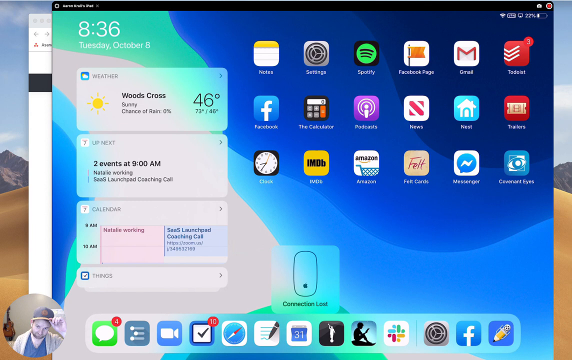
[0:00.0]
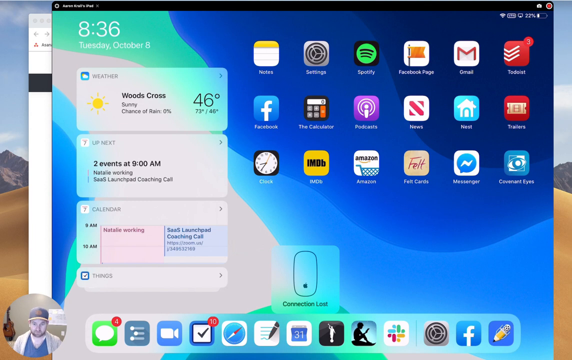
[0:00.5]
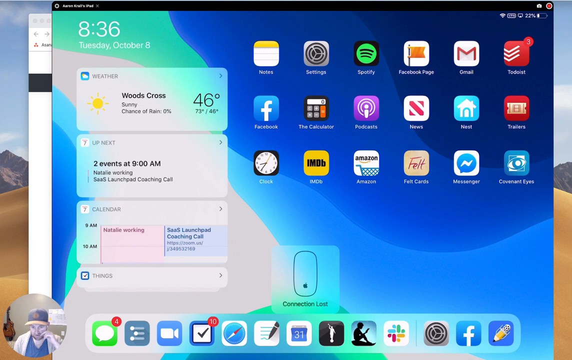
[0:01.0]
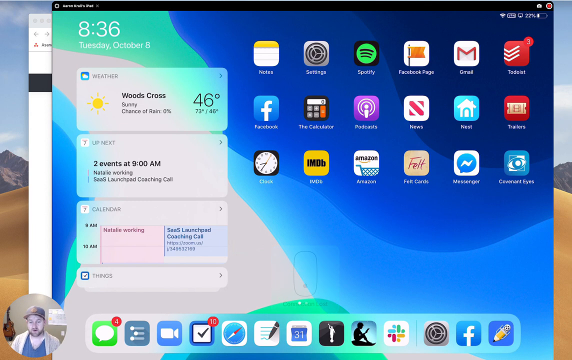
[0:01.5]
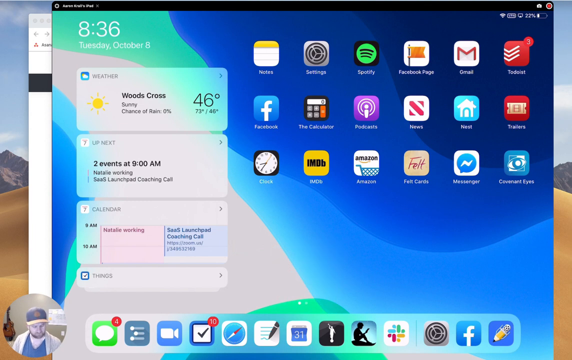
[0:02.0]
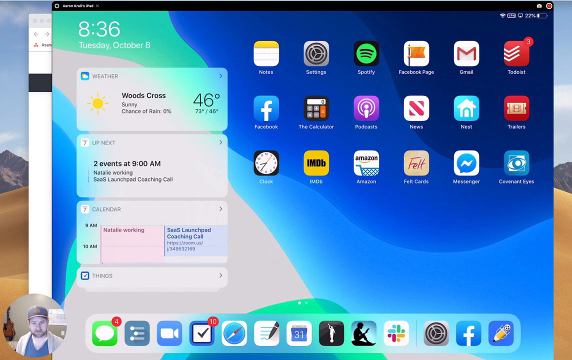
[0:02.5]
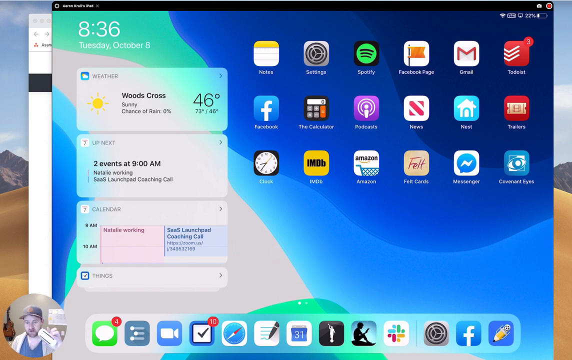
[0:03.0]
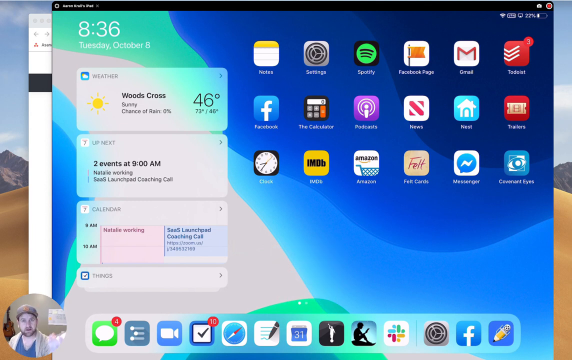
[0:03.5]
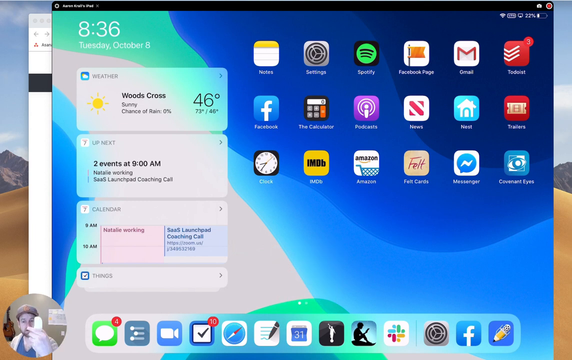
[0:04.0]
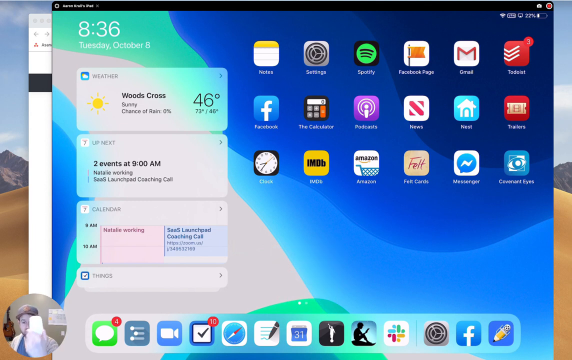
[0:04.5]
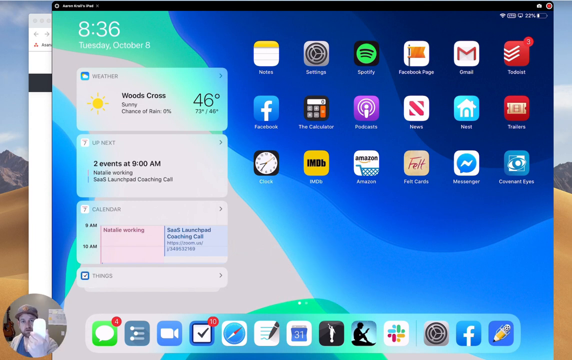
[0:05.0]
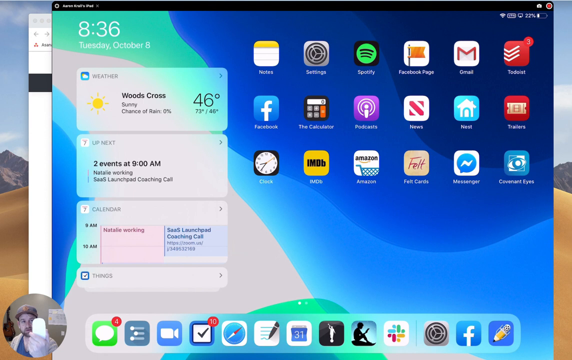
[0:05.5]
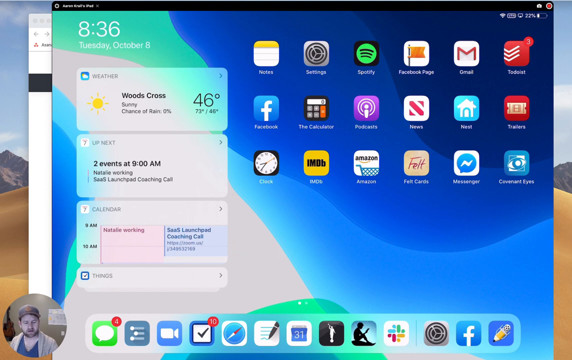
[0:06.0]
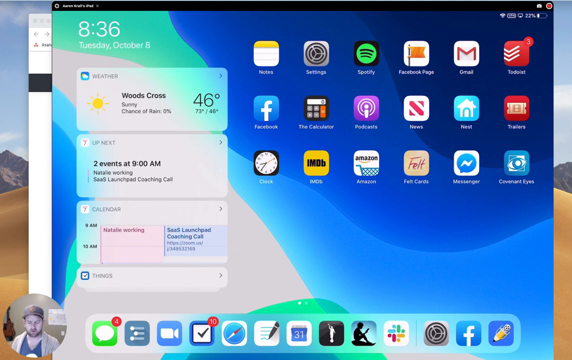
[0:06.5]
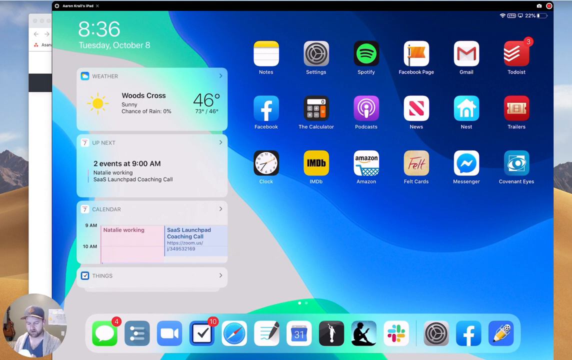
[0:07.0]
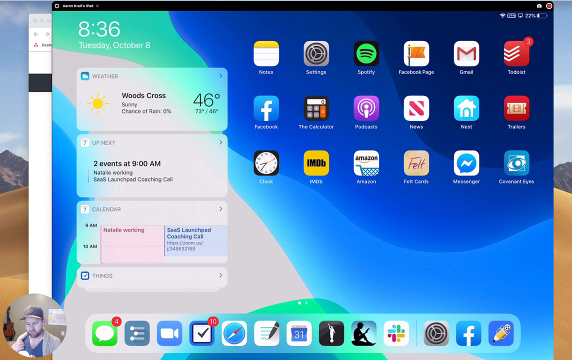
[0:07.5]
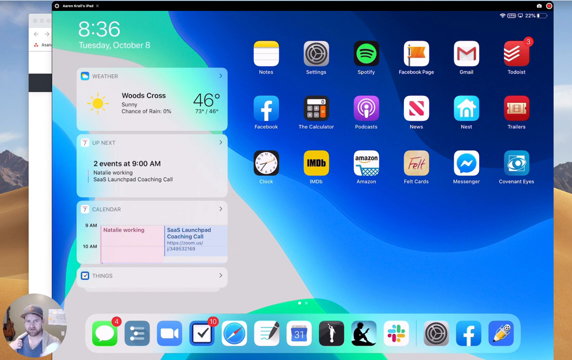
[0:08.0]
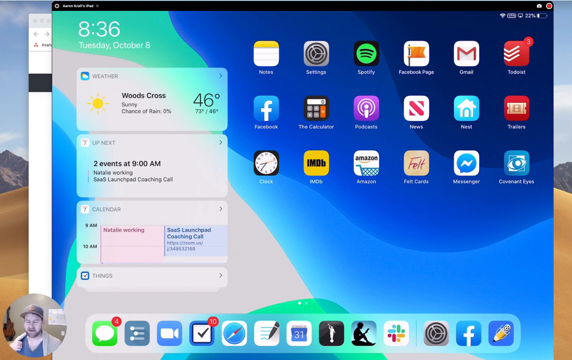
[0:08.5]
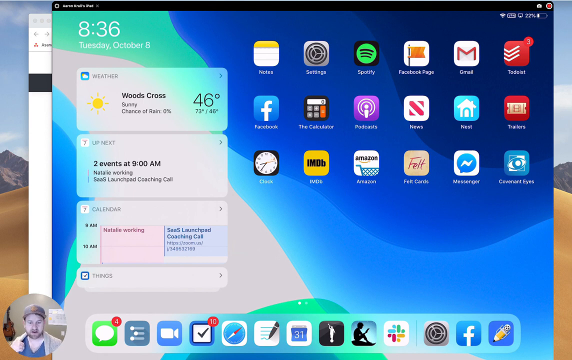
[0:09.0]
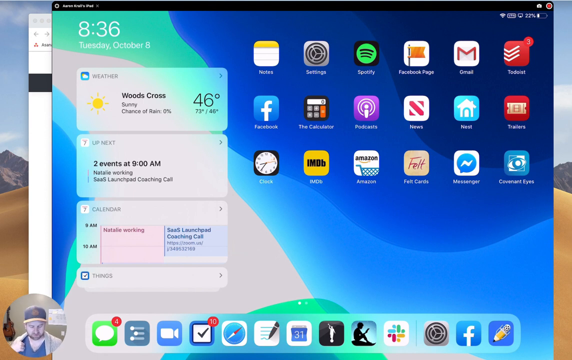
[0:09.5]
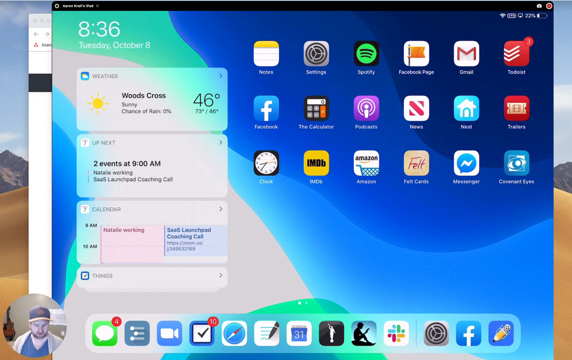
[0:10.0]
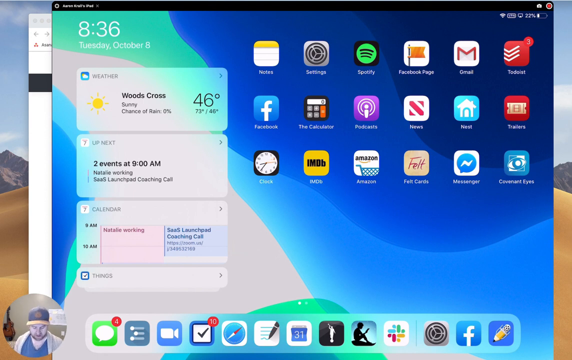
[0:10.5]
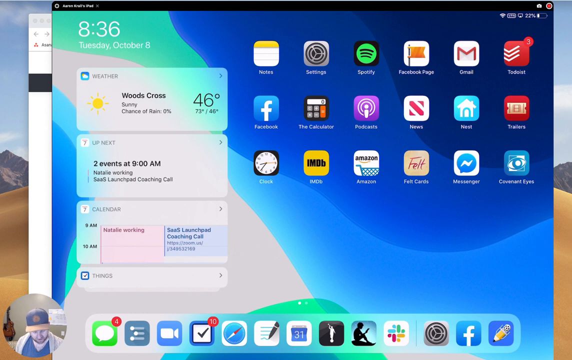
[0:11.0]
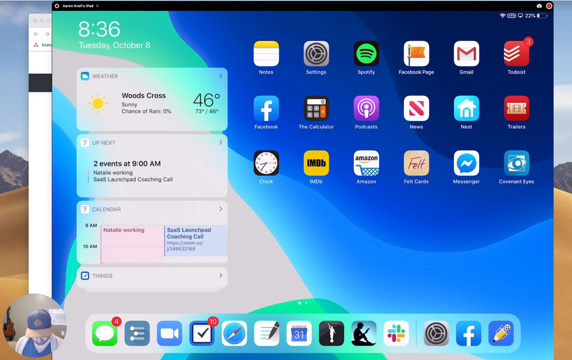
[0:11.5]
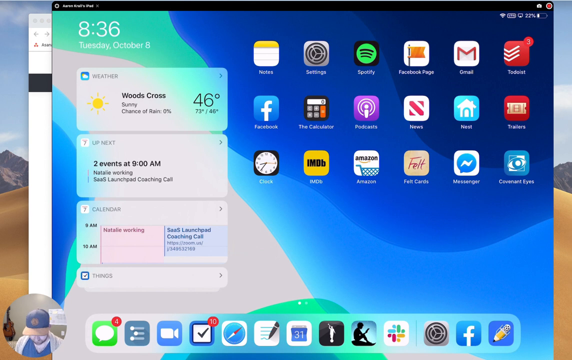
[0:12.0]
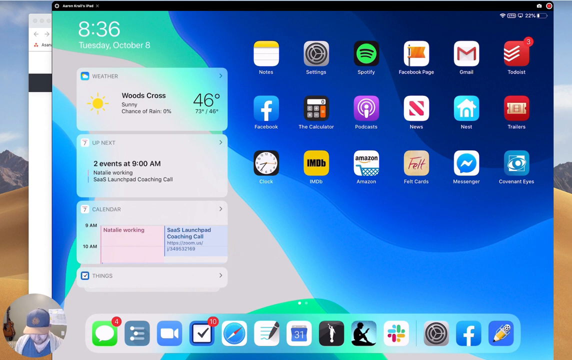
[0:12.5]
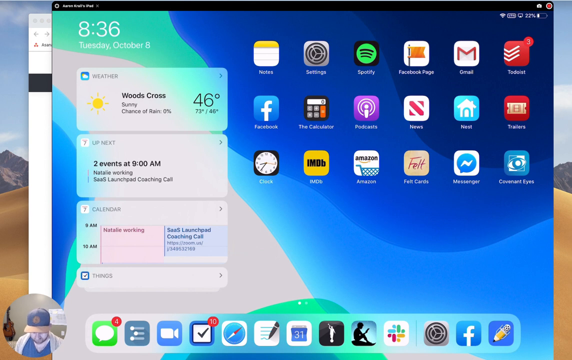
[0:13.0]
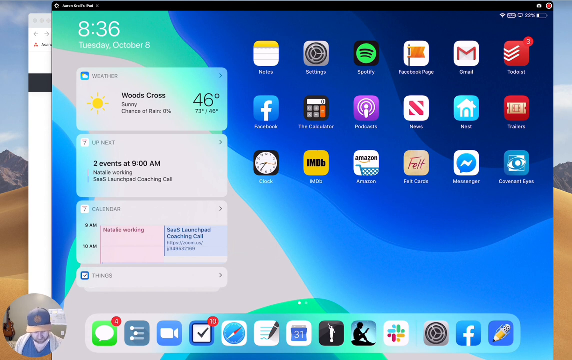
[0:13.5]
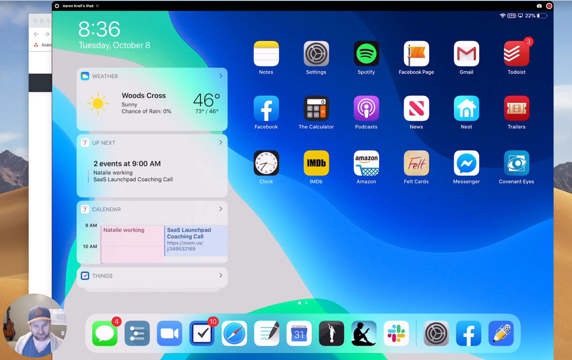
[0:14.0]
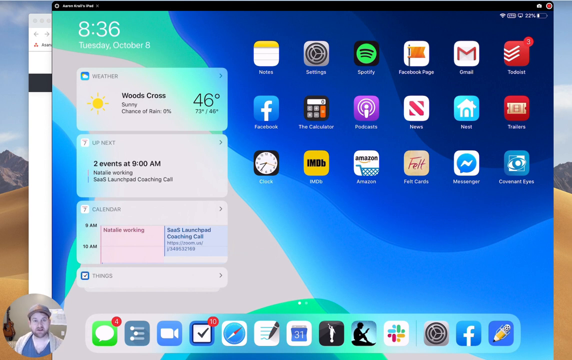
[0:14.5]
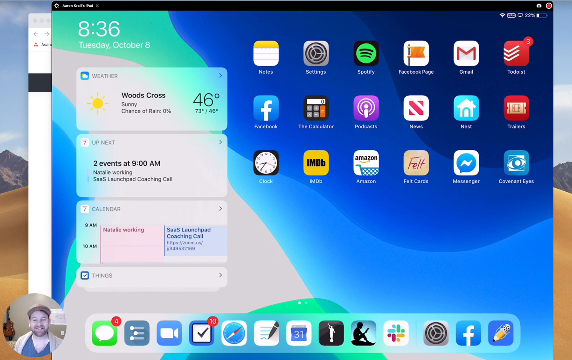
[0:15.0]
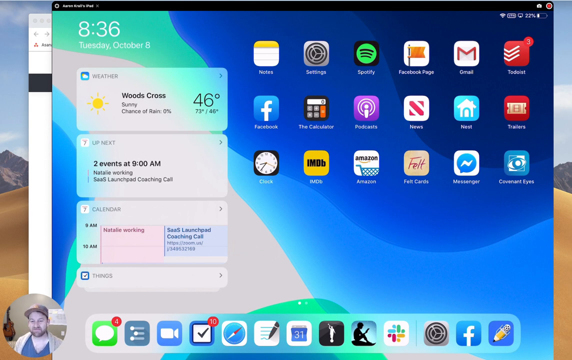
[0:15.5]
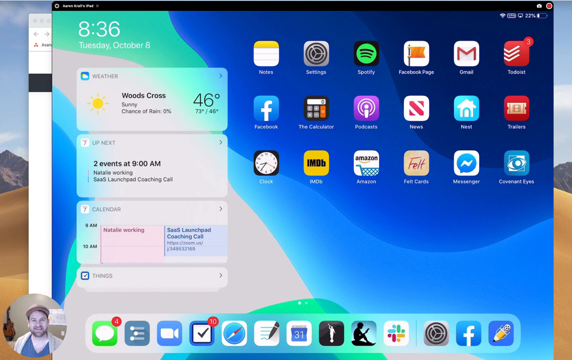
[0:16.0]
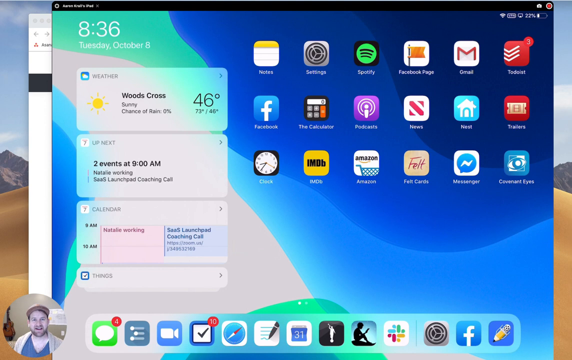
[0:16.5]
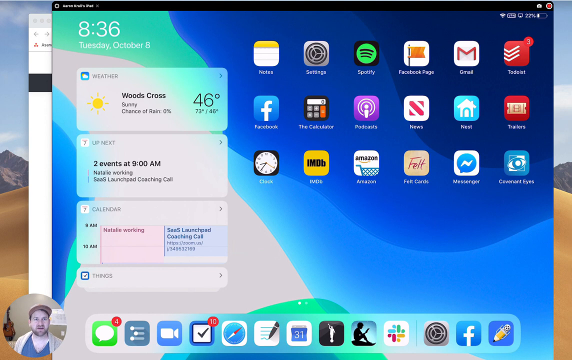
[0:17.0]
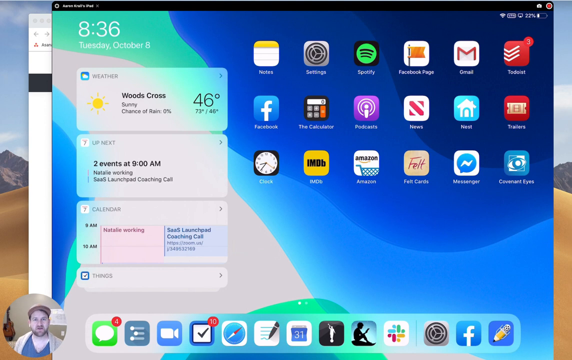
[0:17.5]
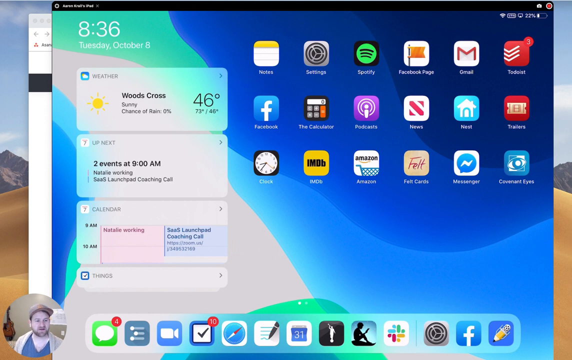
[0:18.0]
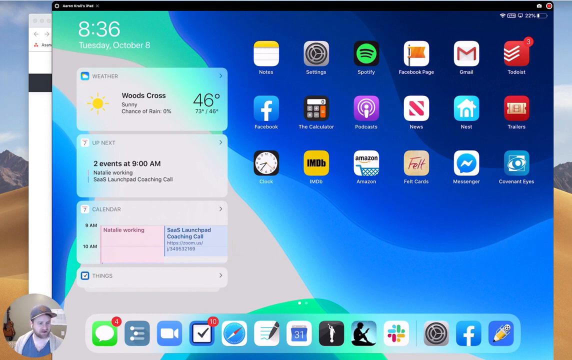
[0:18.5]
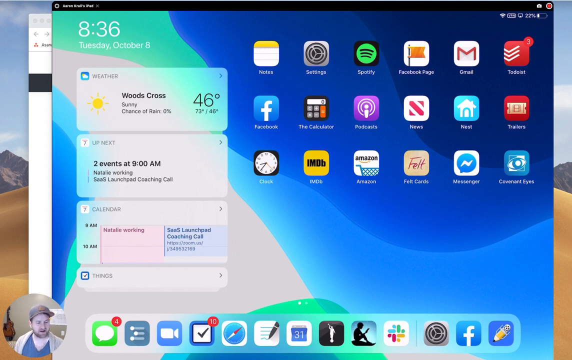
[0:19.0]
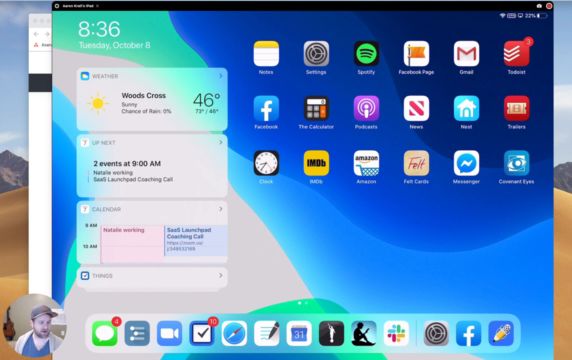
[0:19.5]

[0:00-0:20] A man gives a tutorial on a screen-shared desktop showing many different apps and areas. In the top left section of the screen are the time and date, reading Tuesday, October 8th.